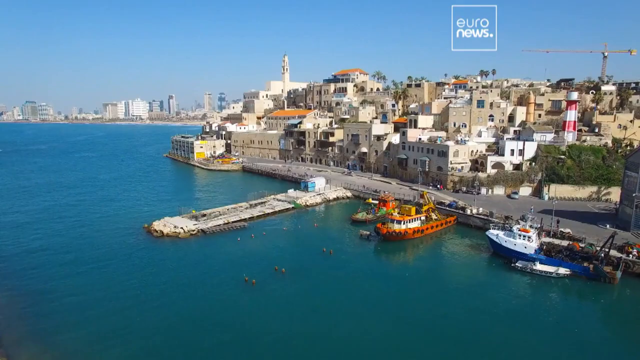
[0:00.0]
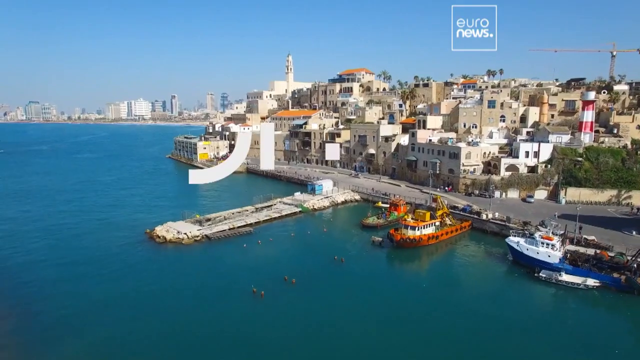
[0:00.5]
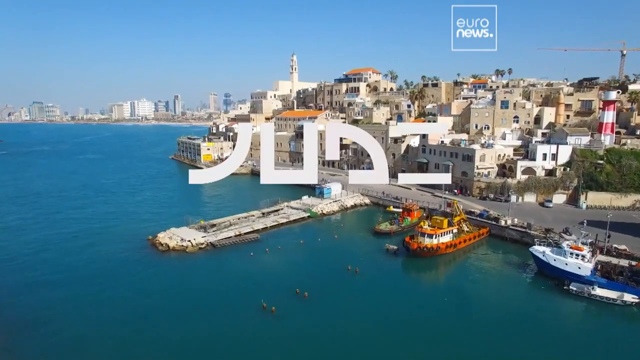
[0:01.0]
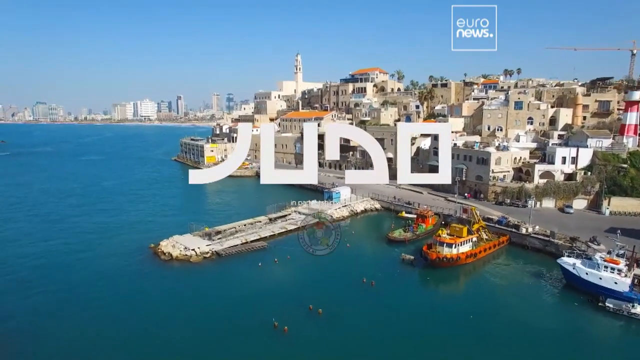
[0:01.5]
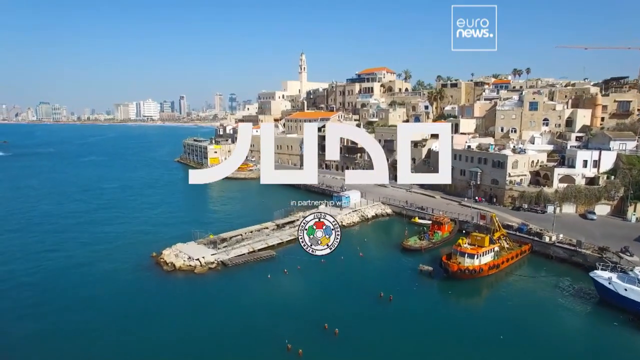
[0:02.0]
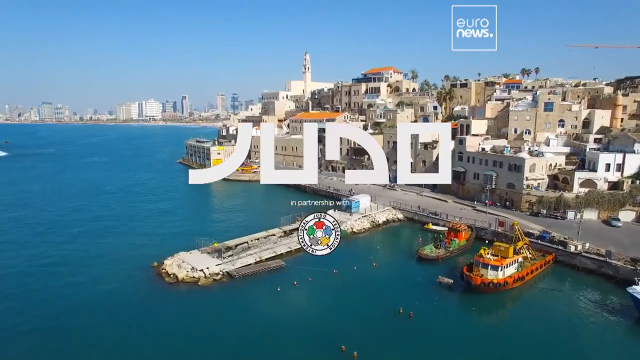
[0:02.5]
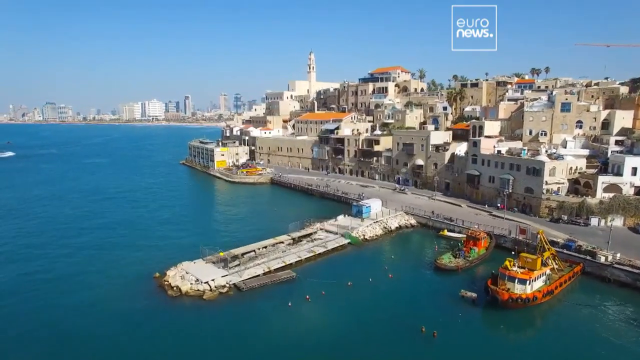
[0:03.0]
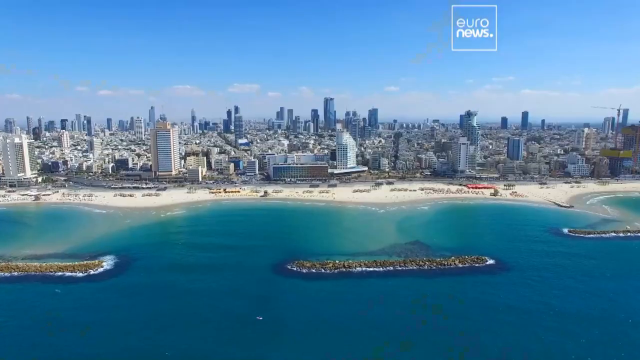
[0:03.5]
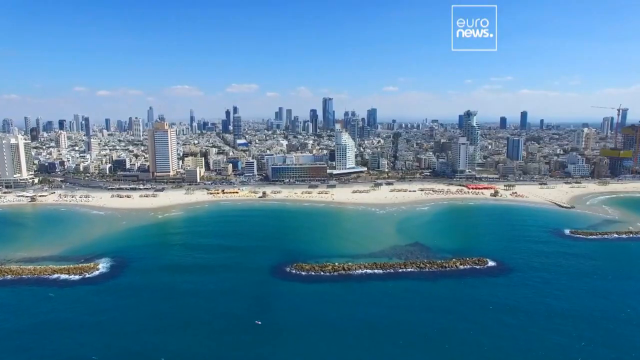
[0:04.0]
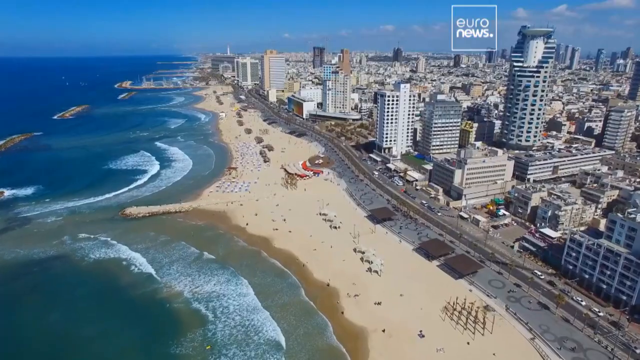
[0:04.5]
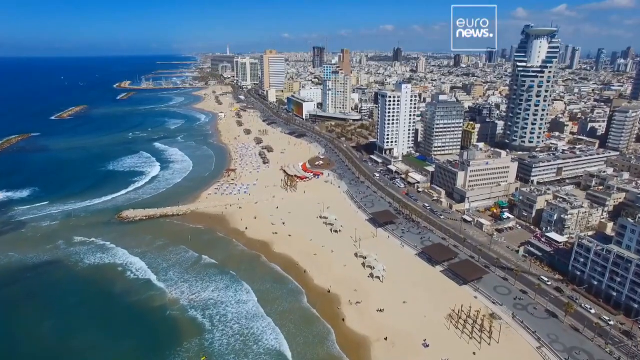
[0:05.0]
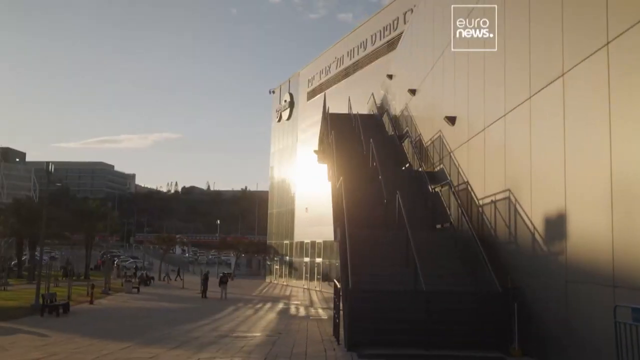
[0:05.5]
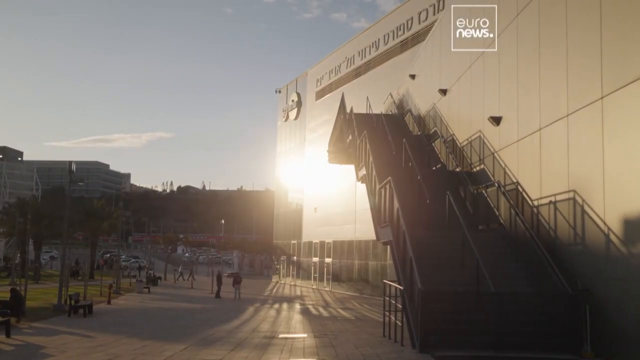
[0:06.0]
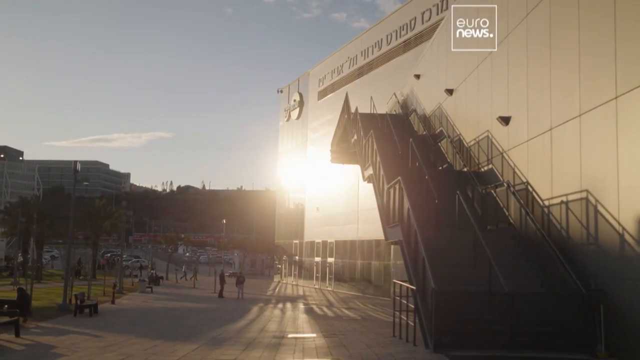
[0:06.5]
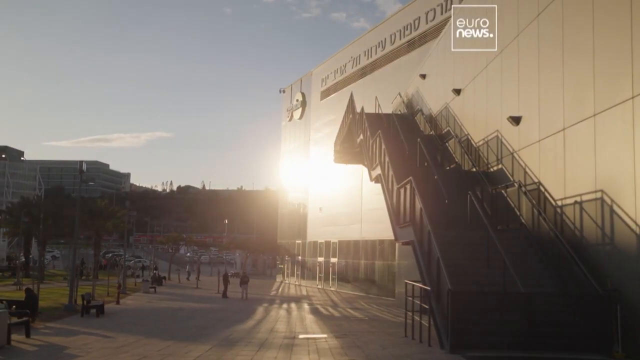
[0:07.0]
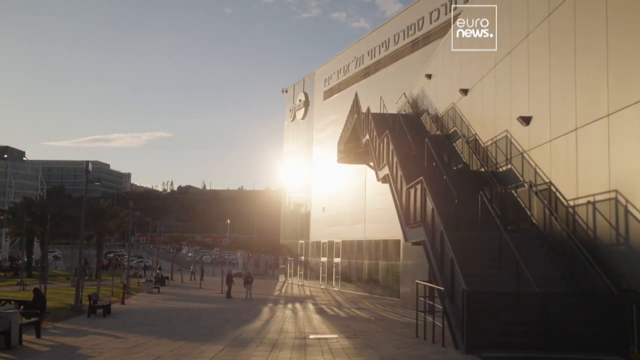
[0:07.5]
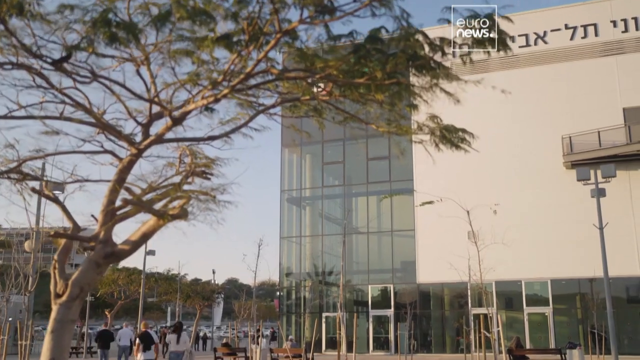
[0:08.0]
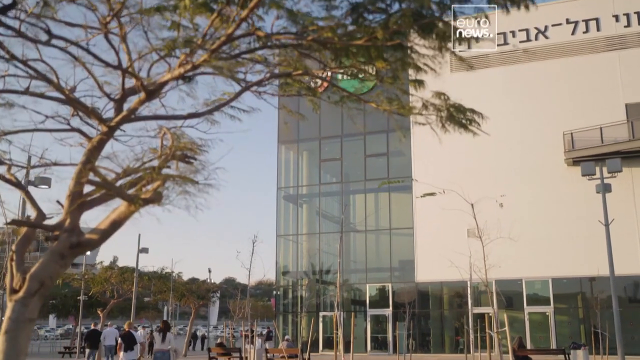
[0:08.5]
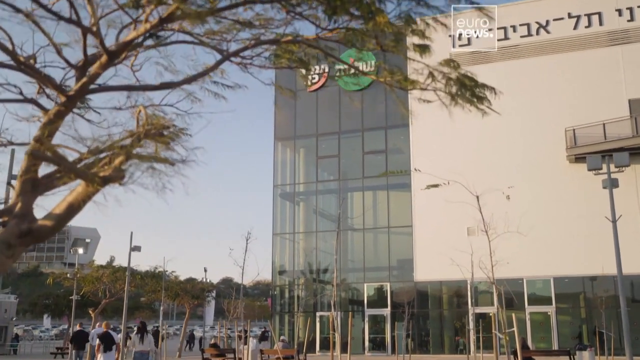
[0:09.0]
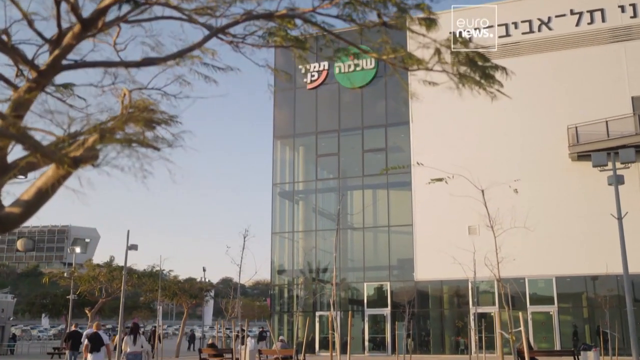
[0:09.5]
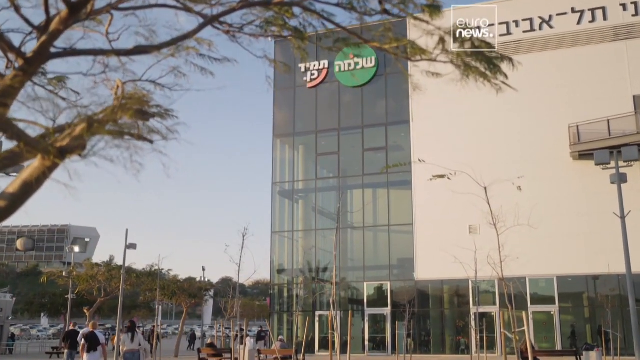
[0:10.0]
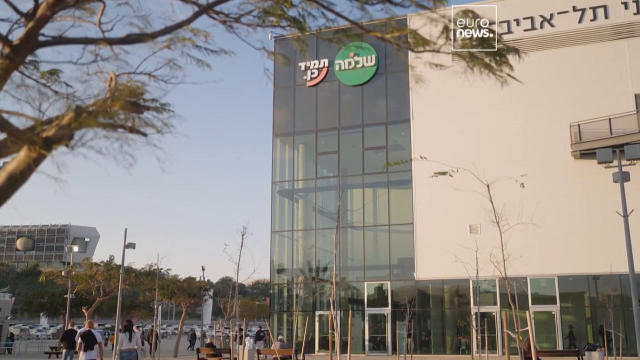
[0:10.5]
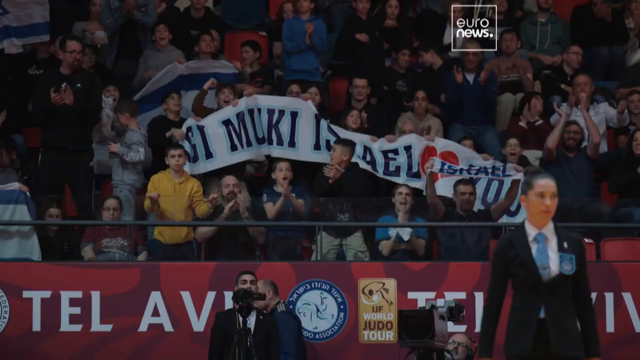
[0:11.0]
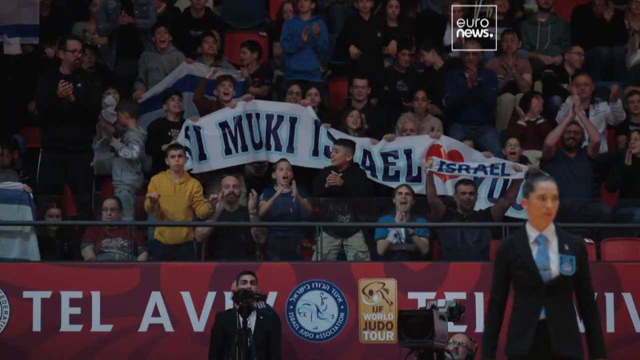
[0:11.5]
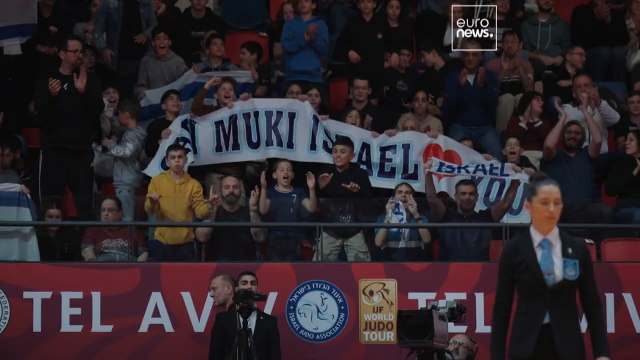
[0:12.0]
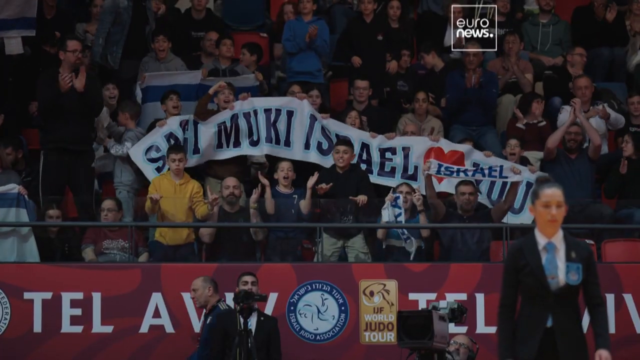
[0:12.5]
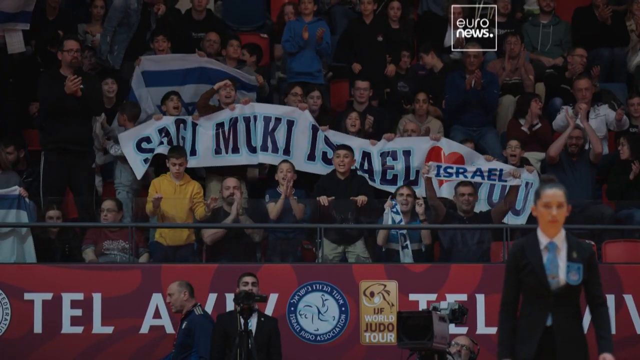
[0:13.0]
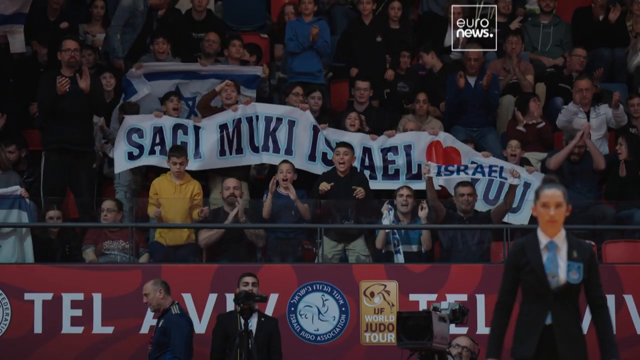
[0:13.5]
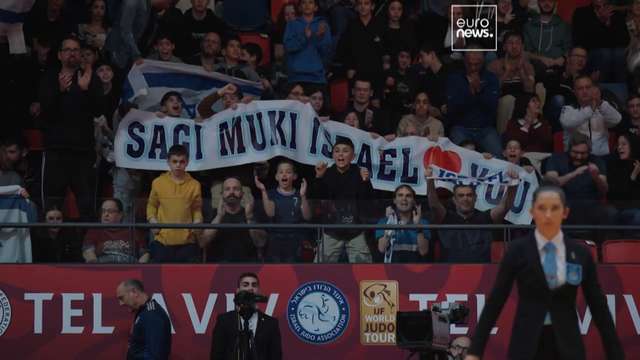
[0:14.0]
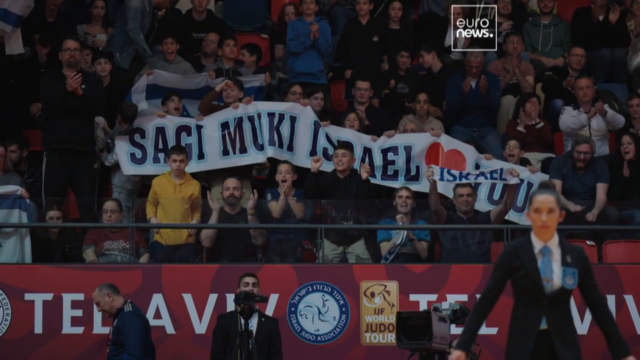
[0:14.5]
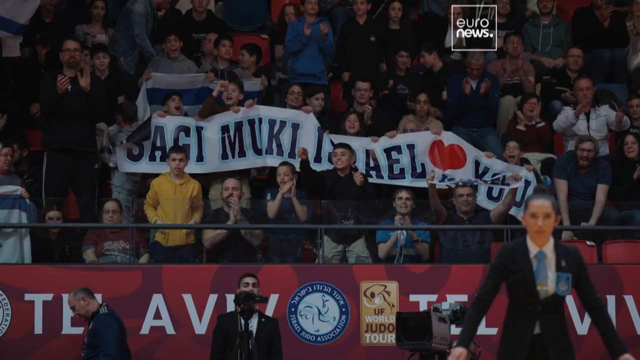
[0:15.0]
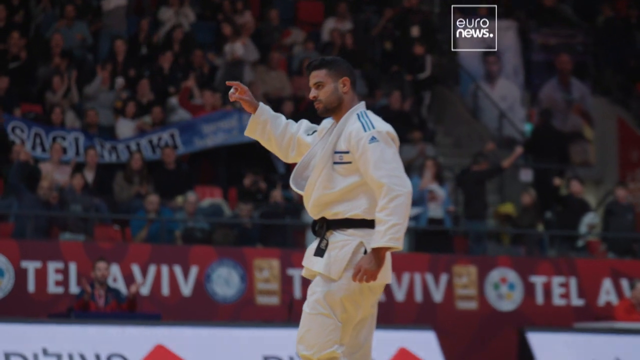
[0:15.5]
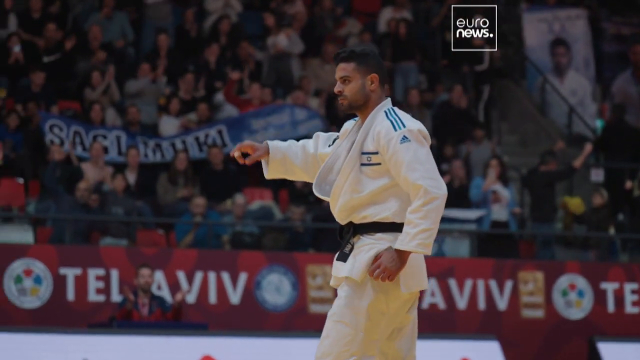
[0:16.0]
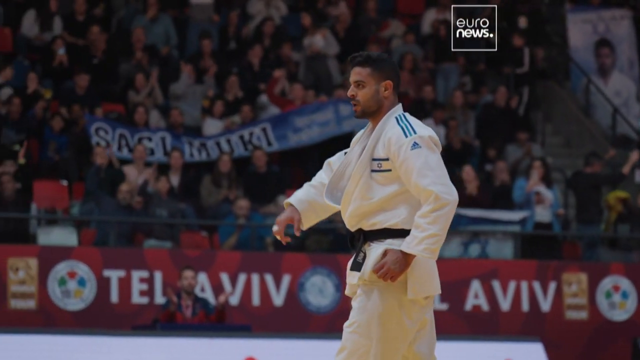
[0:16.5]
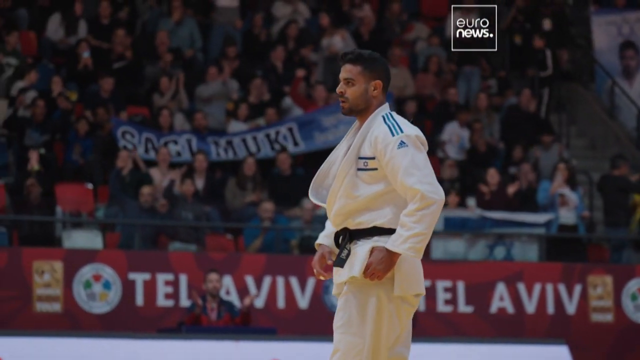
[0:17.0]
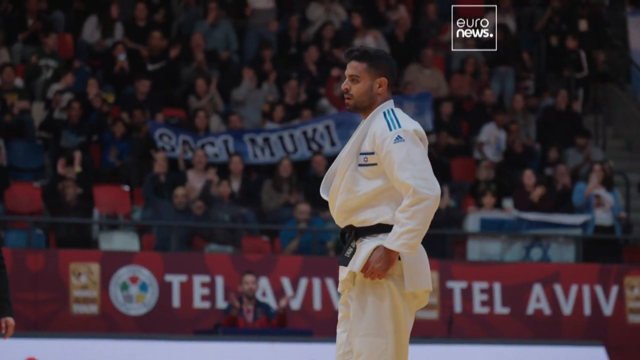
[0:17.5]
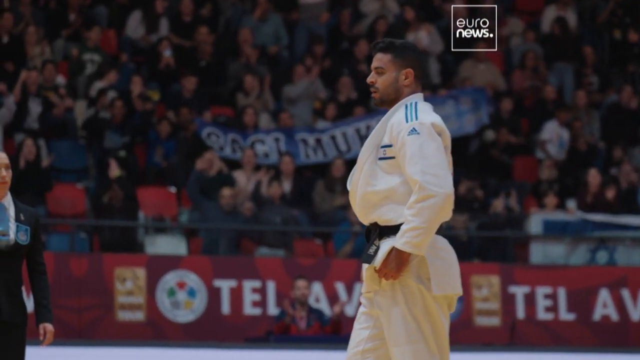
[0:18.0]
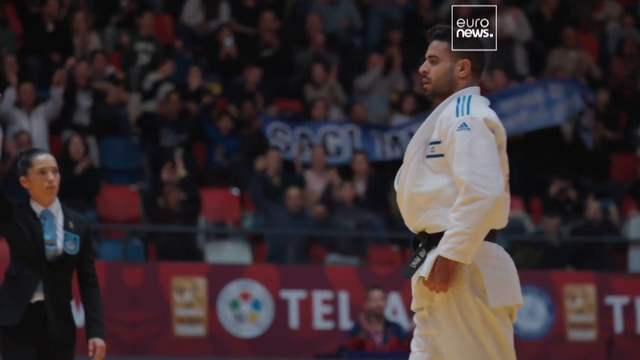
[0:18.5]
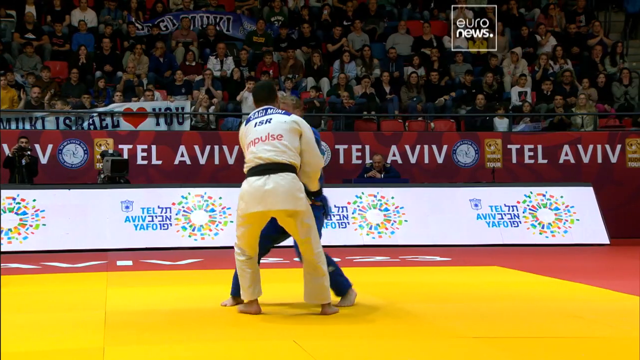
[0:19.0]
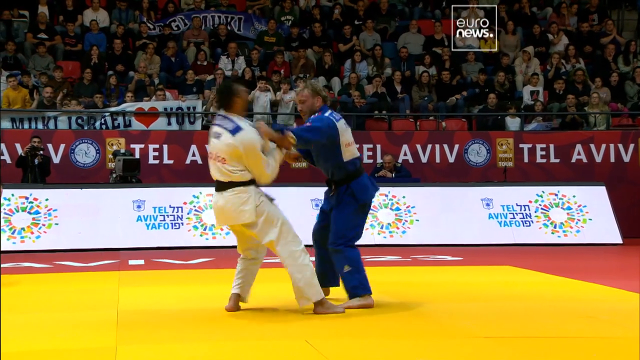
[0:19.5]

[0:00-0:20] An aerial view shows a city on the ocean, with clear blue water and blue skies. There is possibly Arabic writing on screen, and "Euro news" appears in the upper right. The buildings are rectangular and very clustered, some with orange-red roofs. The camera pans back and forth, then cuts to another building that appears to have Hebrew writing on it. Next comes a crowd, with text reading "Mookie Israel"; the scenes appear to be from Israel, showing a stadium full of people, some holding an Israel flag. A judo fighter appears, with the Star of David on his white uniform, and he starts fighting a man in a blue uniform.